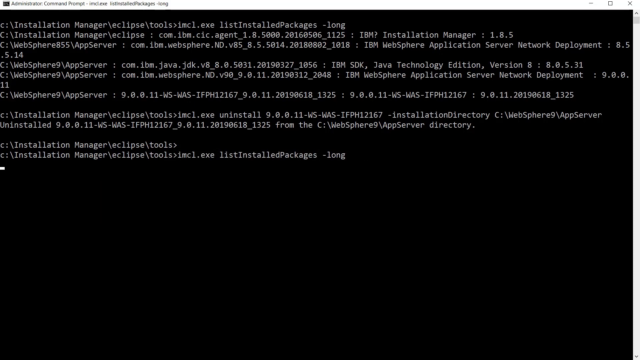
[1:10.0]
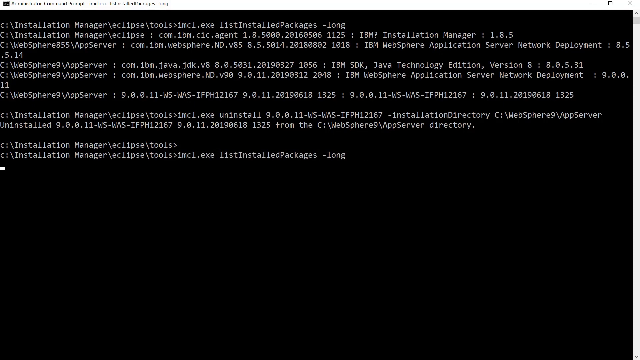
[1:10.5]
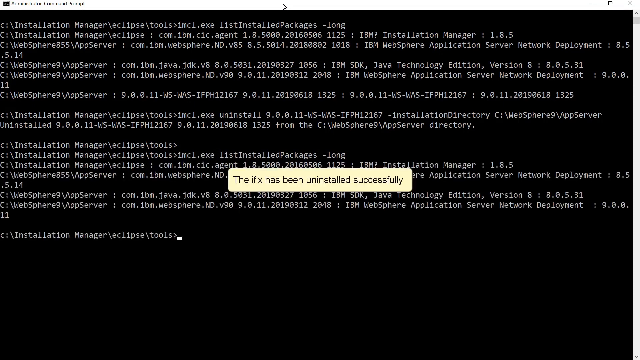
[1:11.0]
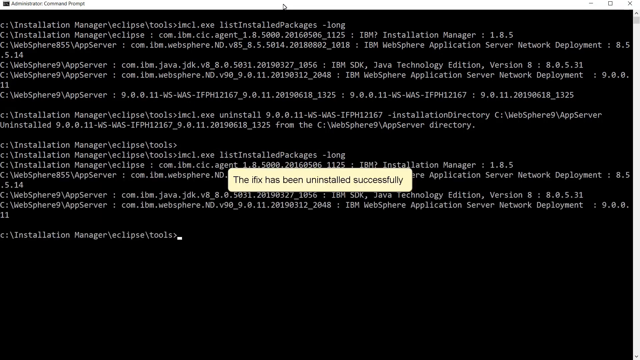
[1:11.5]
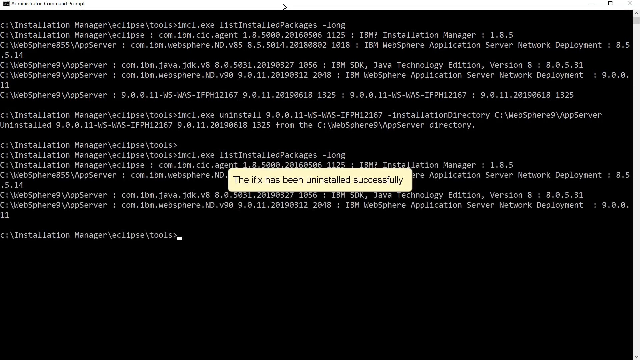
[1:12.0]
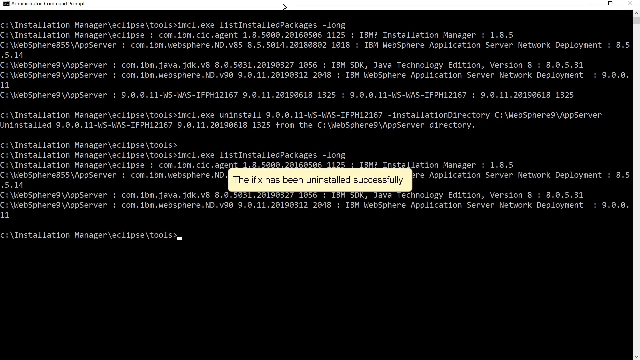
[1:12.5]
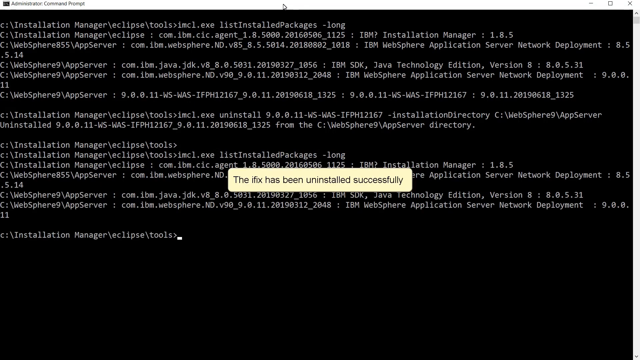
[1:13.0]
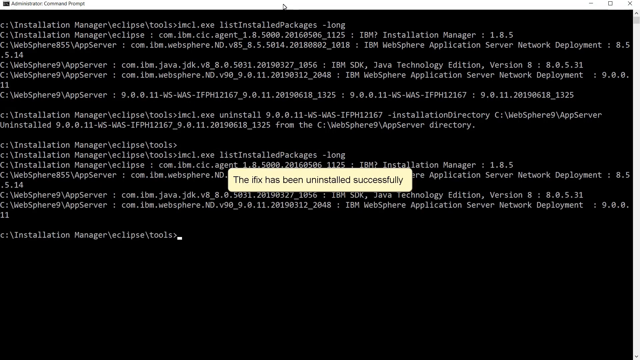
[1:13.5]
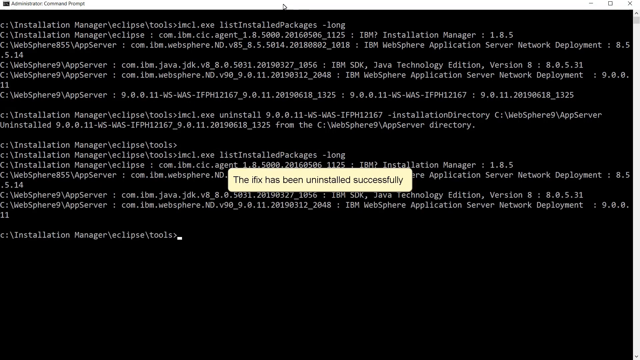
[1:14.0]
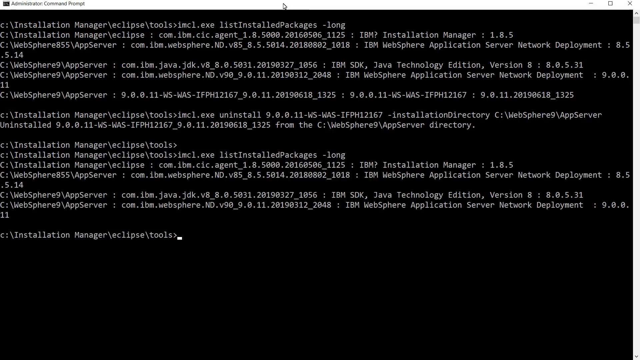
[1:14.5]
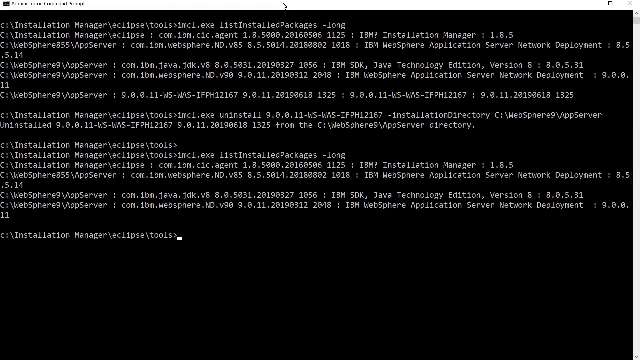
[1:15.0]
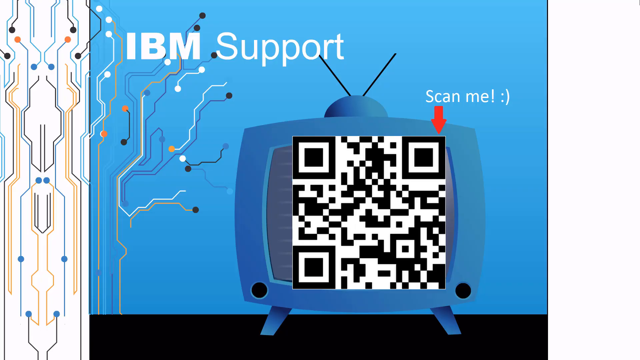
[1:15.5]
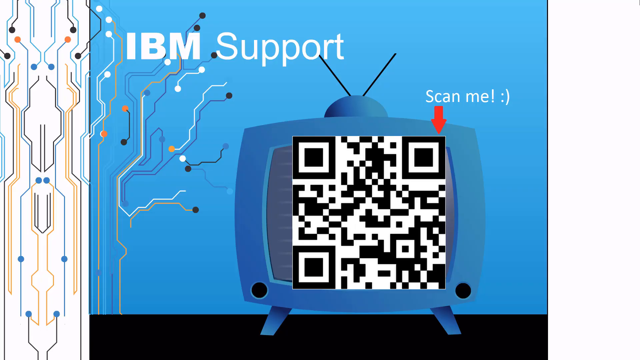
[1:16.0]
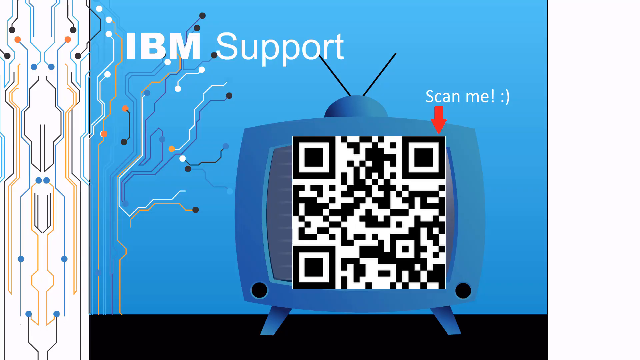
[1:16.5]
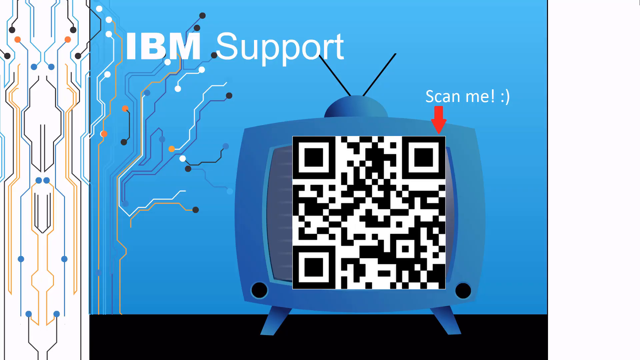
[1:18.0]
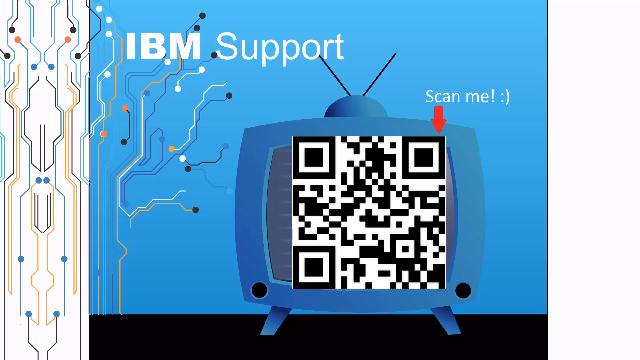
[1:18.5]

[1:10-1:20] The computer screen continues, with the website bar at the top of the screen. What appears to be coding or typing of some kind of algorithm is happening, with the cursor continuing to type against the black screen as the yellow box keeps popping up, showing the different tools and/or wizard involved. Finally the view switches back to a screen with a gray background and a blue background, showing a blue TV with "IBM support". It says "scan me", next to a scan box of the kind you hold a phone up to for information.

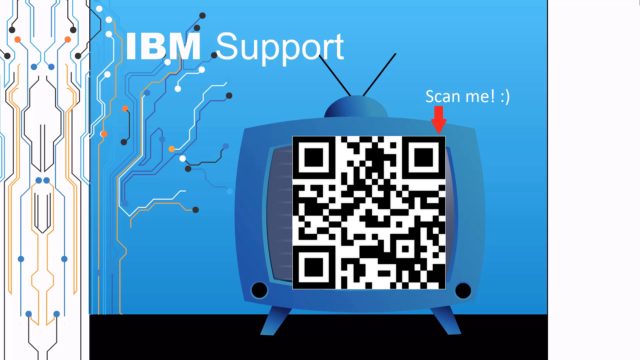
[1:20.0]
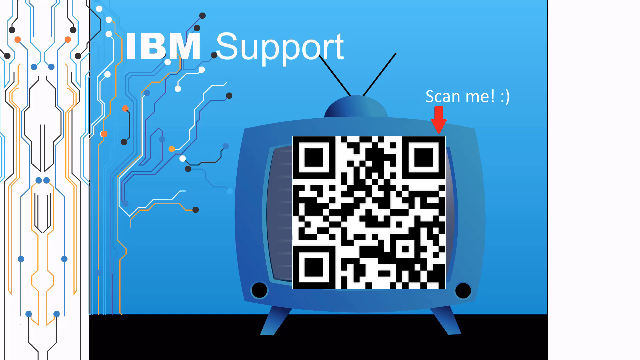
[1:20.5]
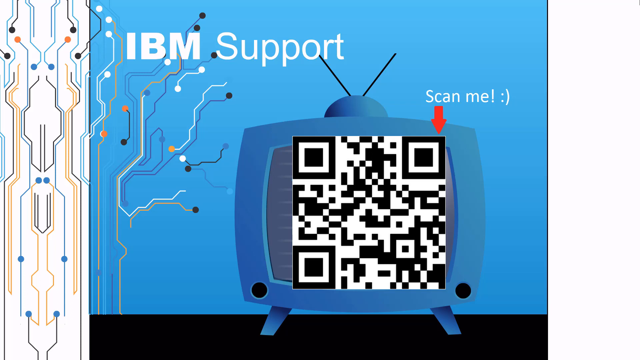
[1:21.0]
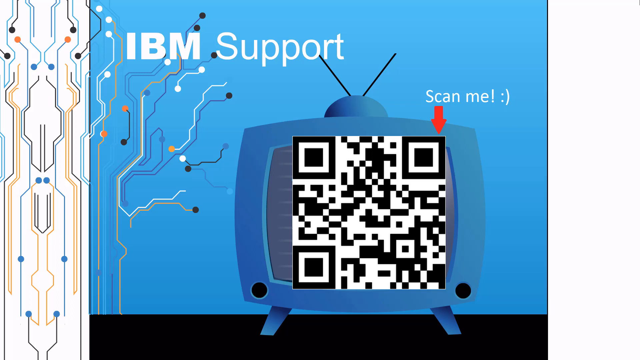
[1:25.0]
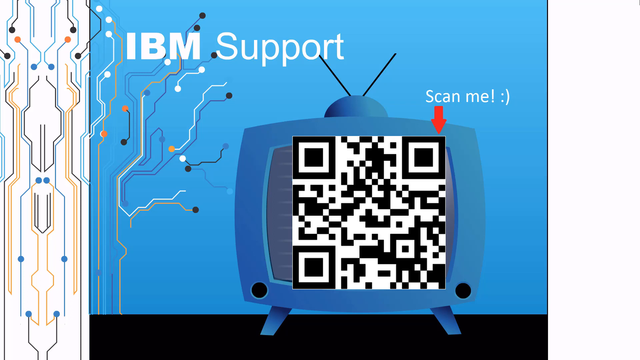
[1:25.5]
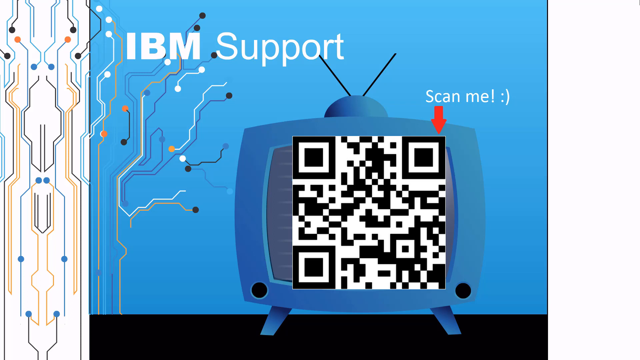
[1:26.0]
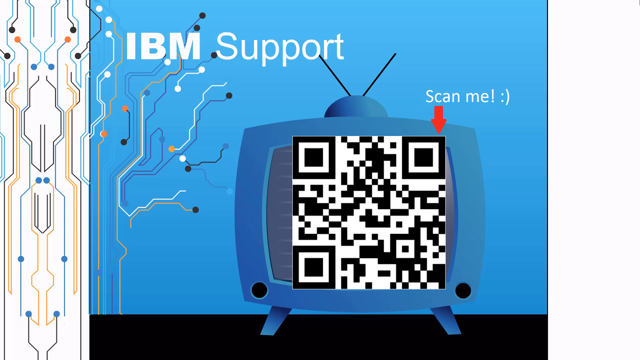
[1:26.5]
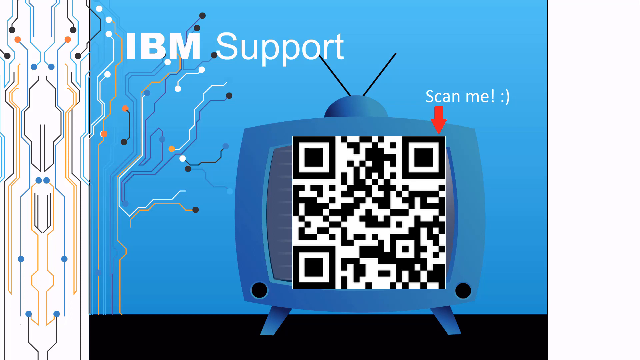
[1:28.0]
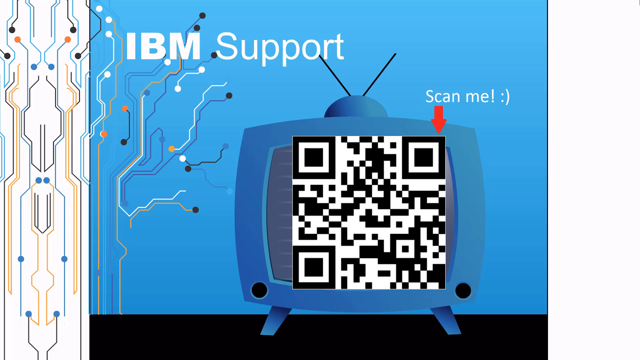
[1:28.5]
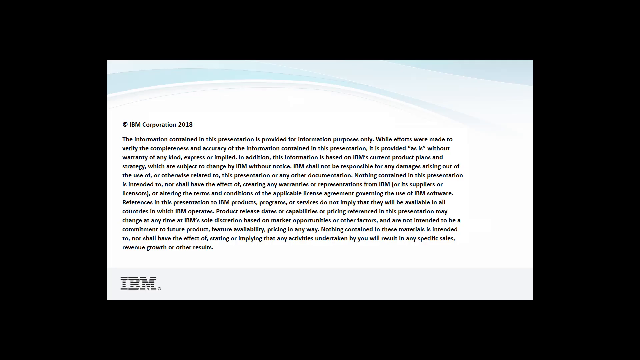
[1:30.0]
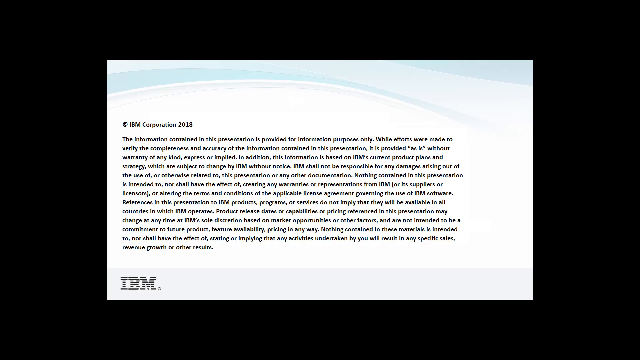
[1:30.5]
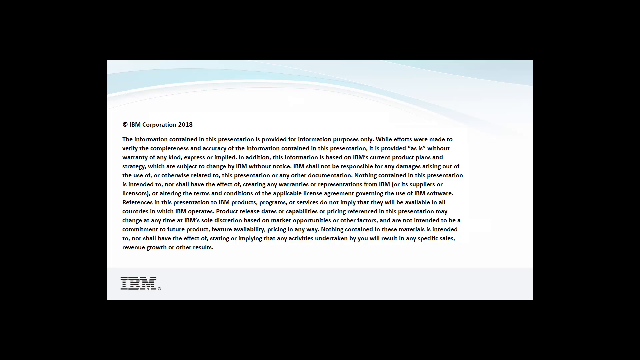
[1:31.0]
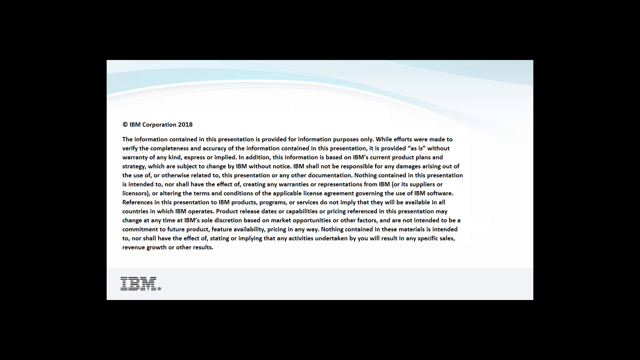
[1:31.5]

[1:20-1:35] The IBM support image appears, in what seems to be a tutorial. A cursor continues to type in some programming, algorithm or coding. The view is back on the gray page with a split screen and a blue background that says "IBM support". A red arrow carries white text that says "scan me", and below it is a black-and-white code box that you hold a camera up to in order to scan it and go to a website.